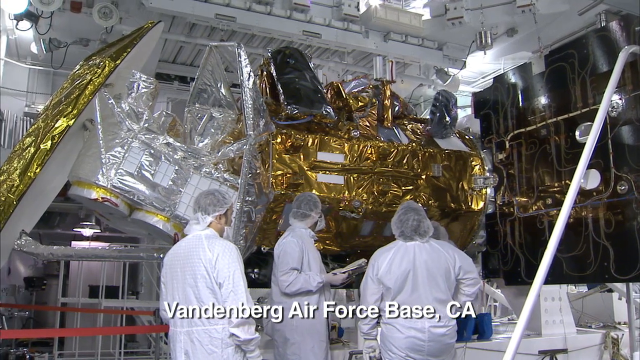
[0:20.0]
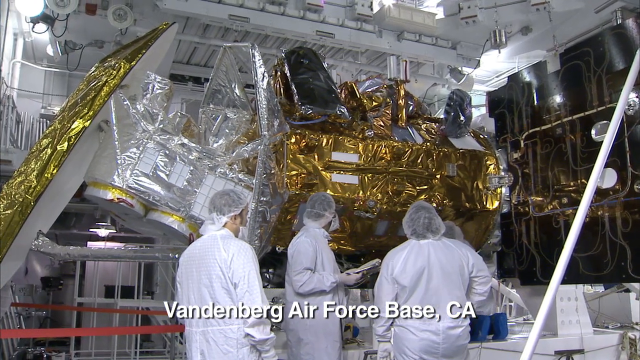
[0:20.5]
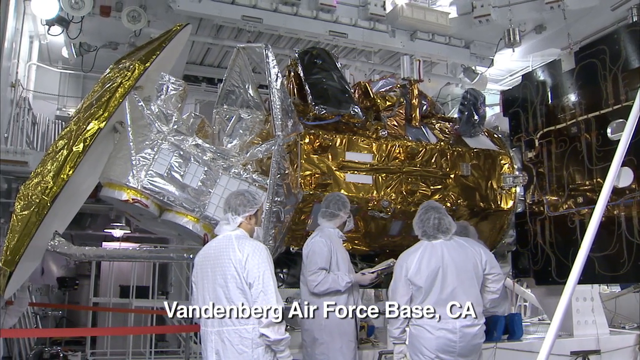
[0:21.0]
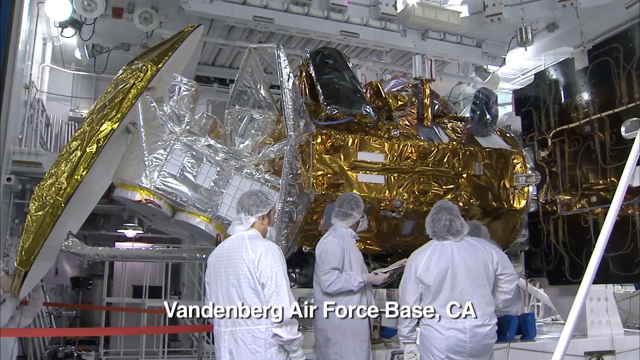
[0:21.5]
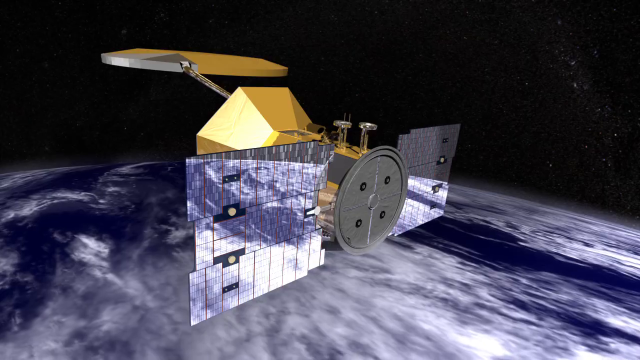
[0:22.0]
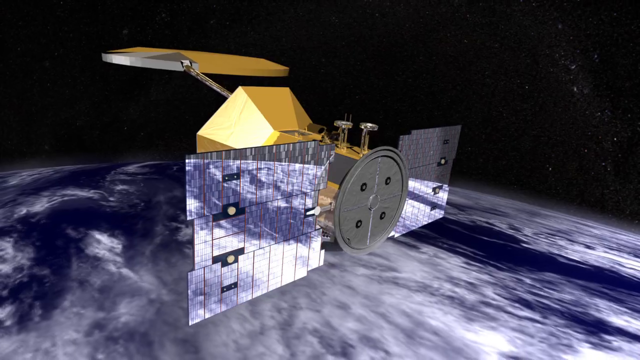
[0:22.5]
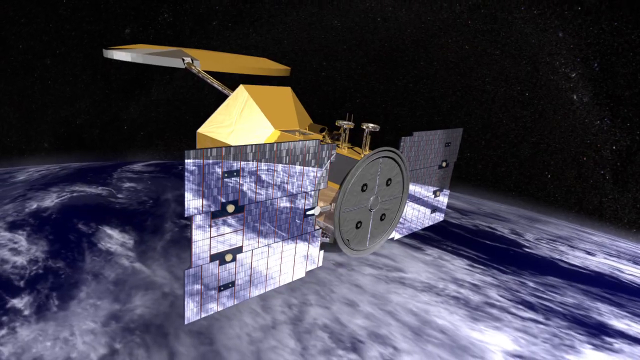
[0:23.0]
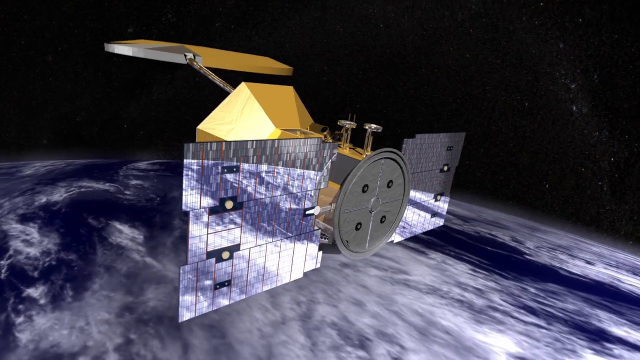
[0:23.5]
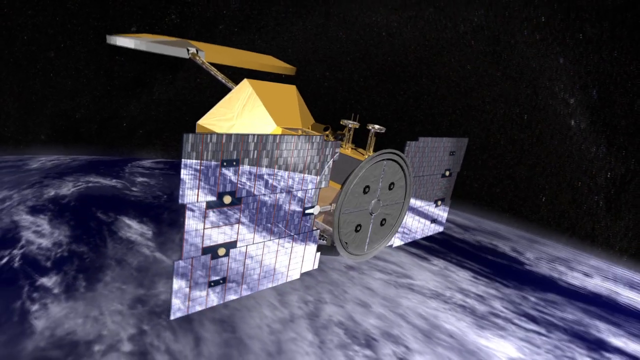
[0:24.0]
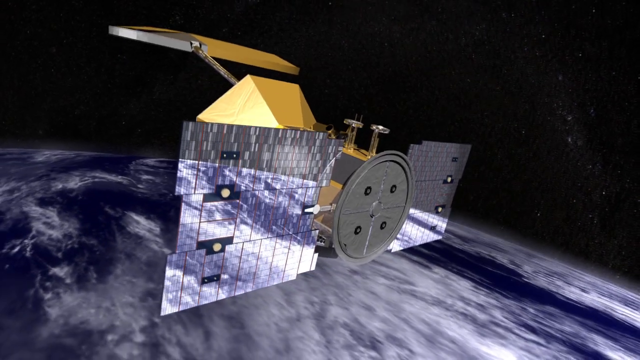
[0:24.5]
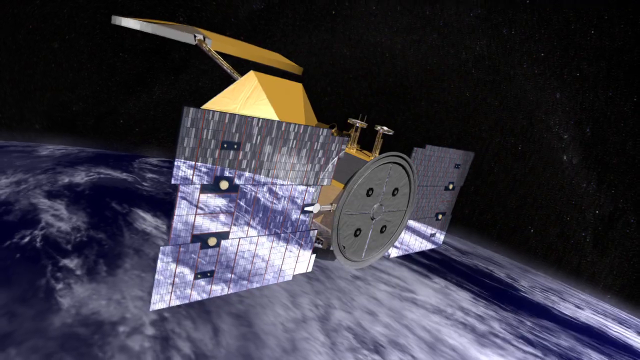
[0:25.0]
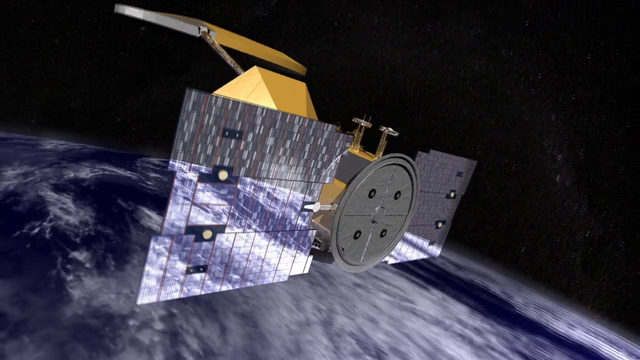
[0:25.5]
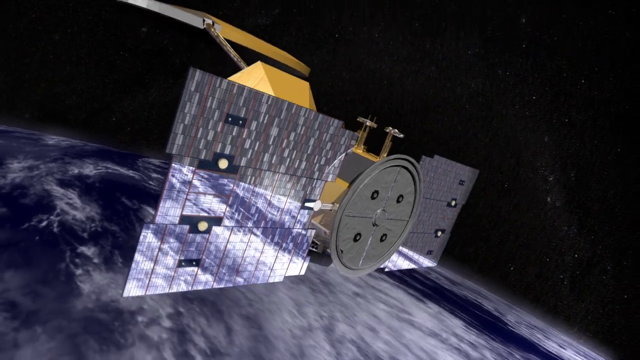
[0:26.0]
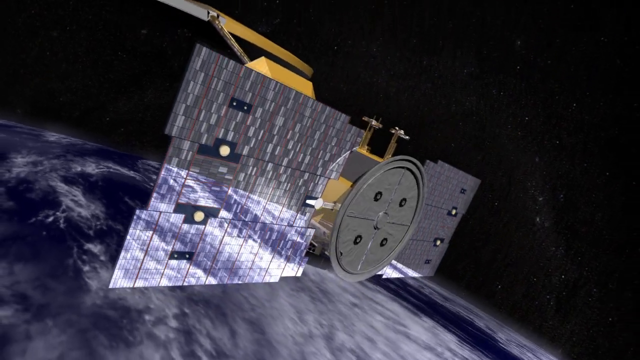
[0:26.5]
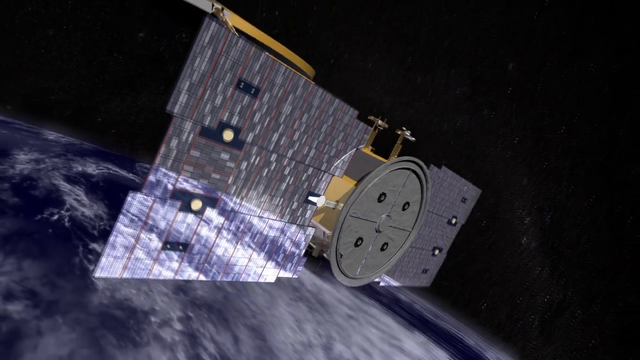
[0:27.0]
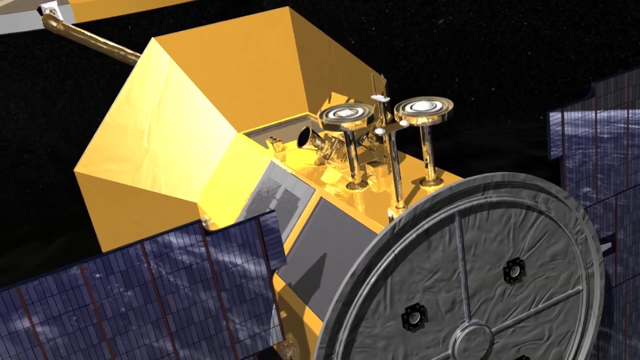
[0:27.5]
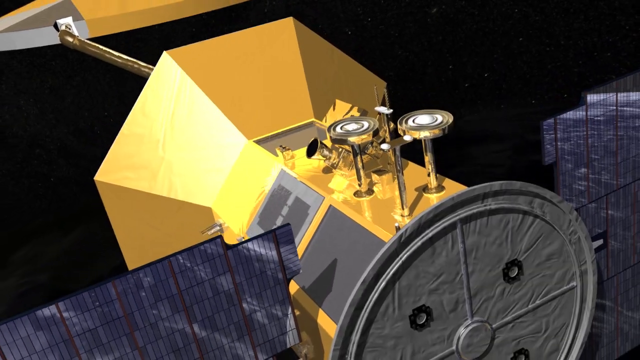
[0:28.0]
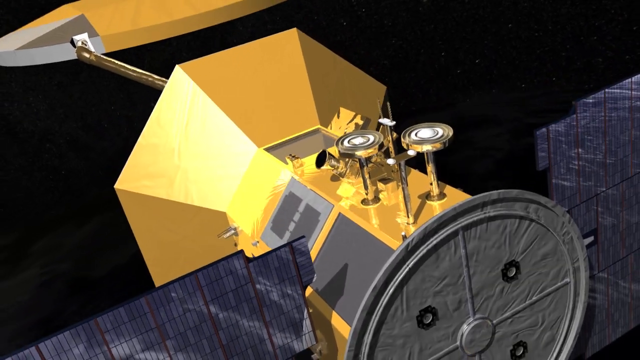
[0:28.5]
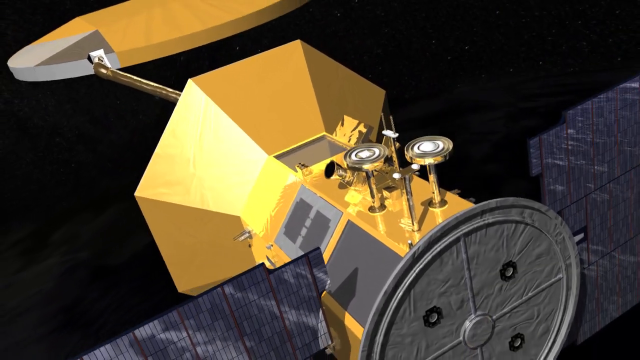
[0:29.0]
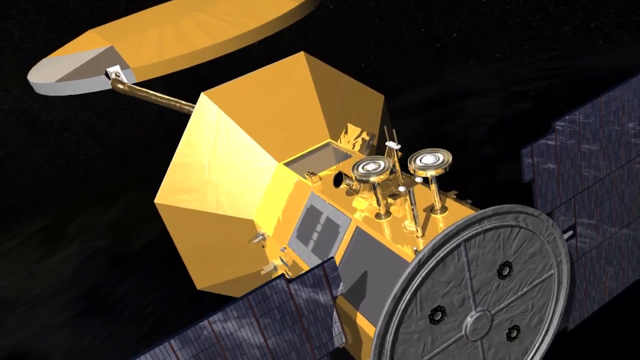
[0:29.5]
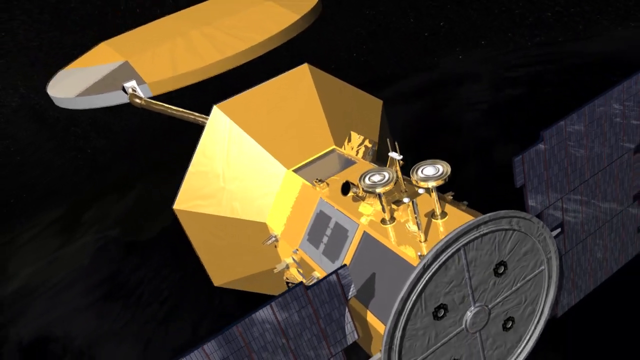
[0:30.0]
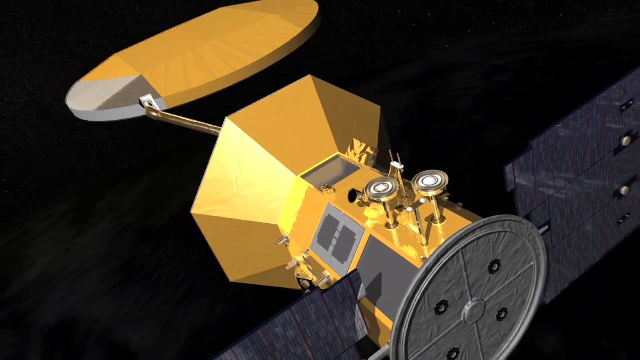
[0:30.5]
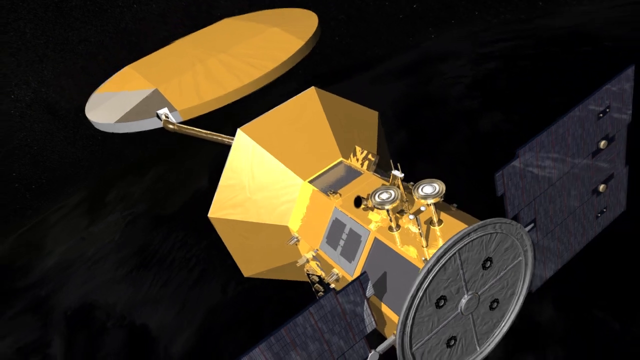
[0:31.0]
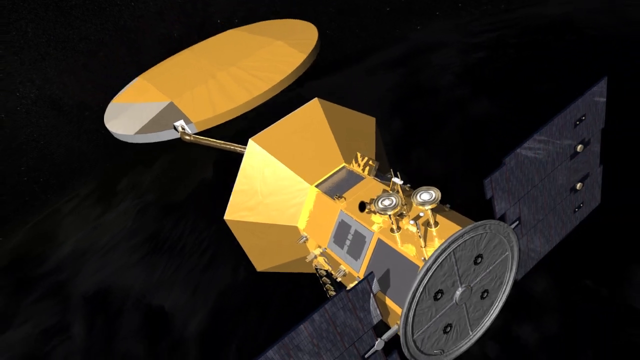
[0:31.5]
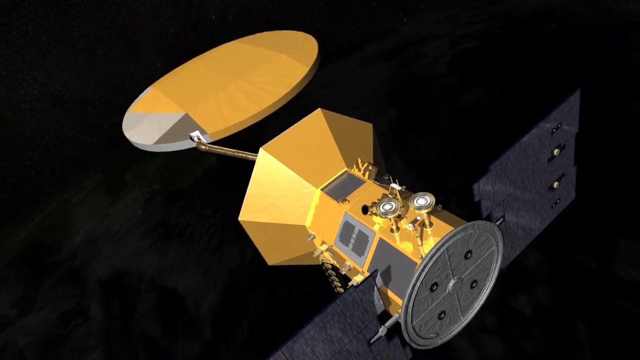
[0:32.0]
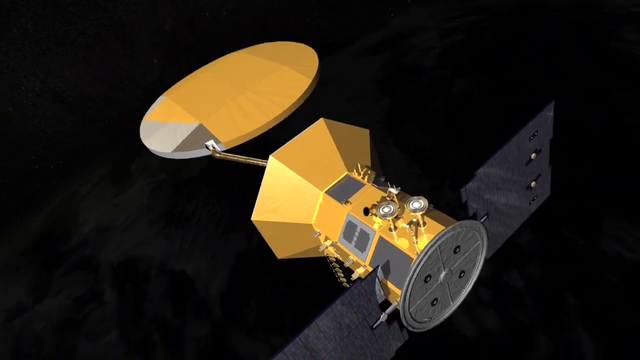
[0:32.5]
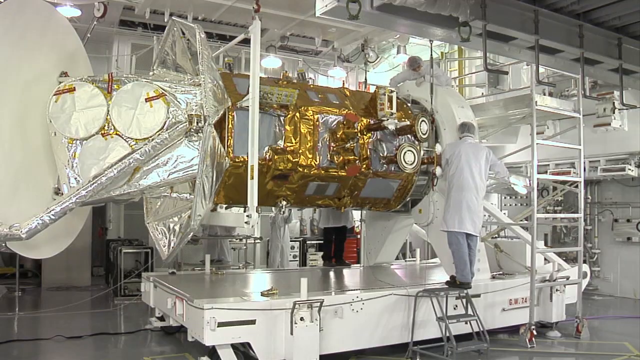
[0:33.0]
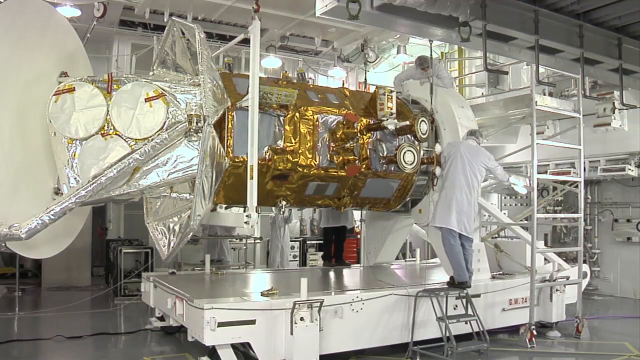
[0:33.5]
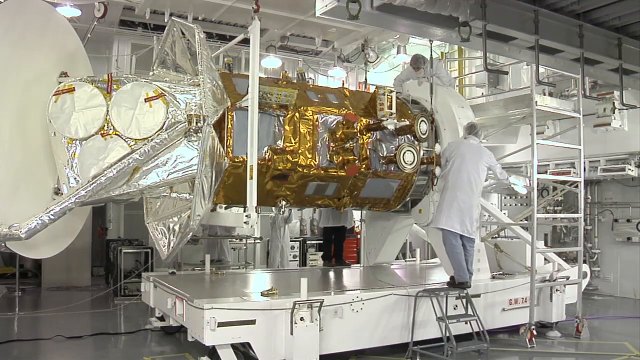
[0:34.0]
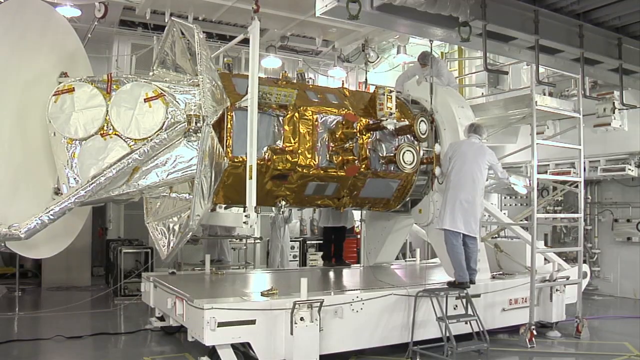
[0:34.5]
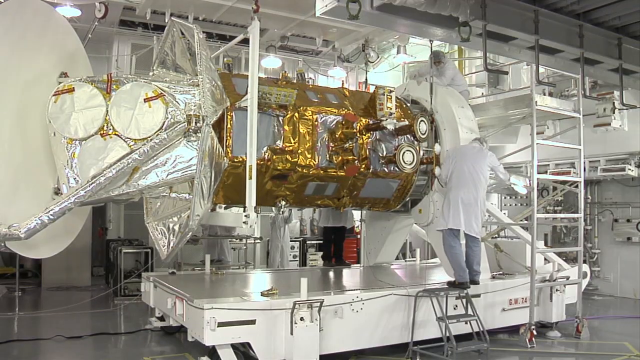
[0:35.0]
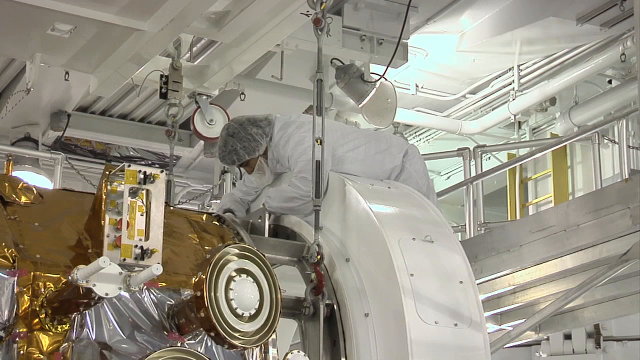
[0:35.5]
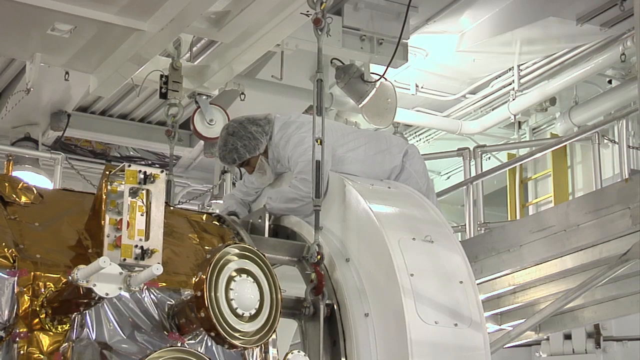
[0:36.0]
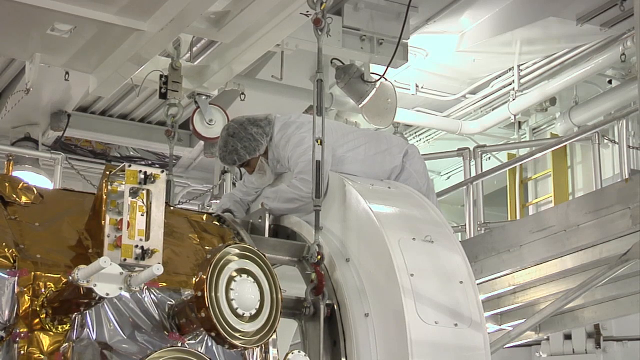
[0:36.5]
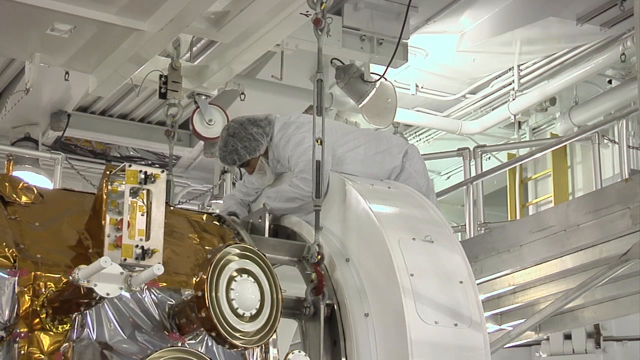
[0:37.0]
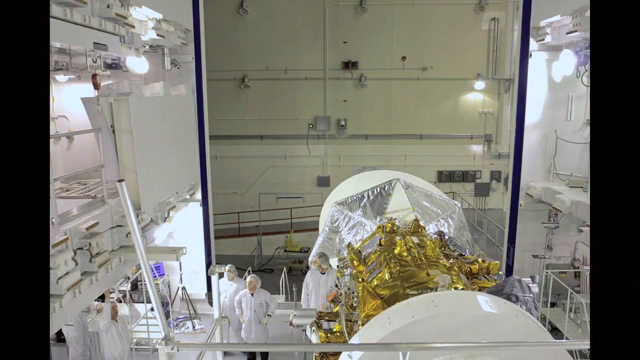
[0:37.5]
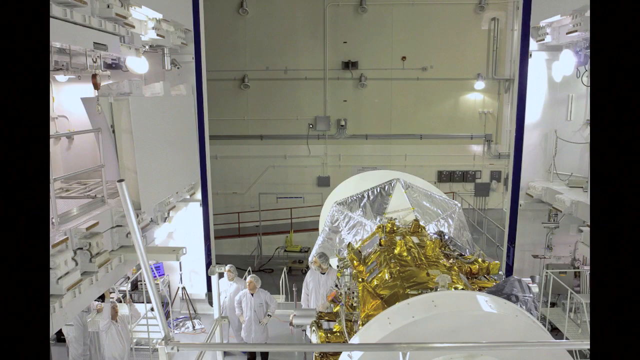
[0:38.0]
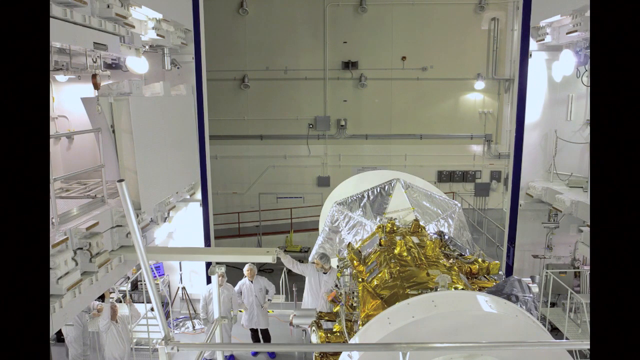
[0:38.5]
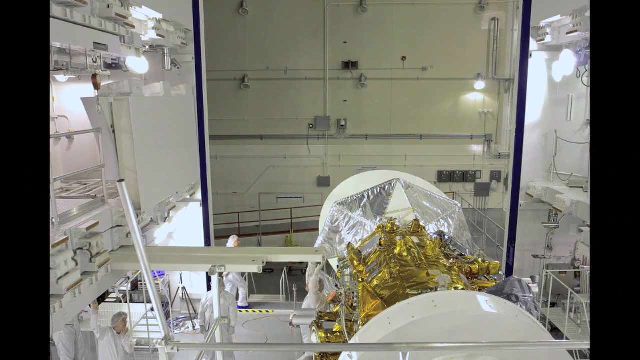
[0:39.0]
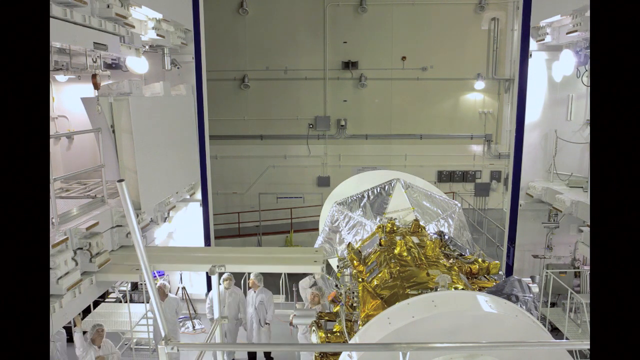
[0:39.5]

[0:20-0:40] People wearing lab coats, hairnets and masks over their faces stand in a room with bright lights and what appears to be some form of space equipment in the background. Text at the bottom of the screen reads "Vandenberg Air Force Base, CA." Next, a satellite floats in space with an image of the Earth below it and black space in the background, followed by a close-up view of the satellite and all the workings on it. The video then returns to a live view of the people standing in the room, who seem to be working on the equipment; one of them leans over some of the equipment and appears to be working on something.